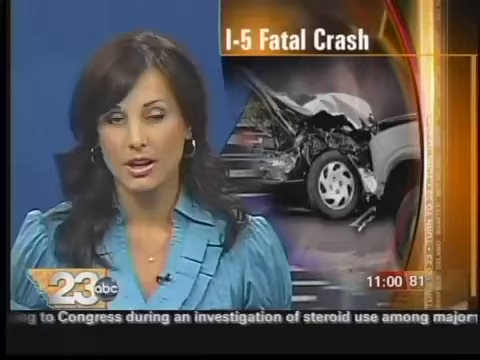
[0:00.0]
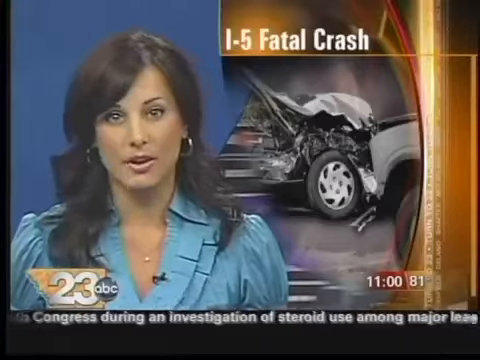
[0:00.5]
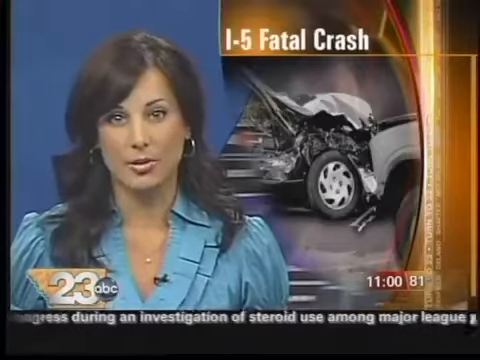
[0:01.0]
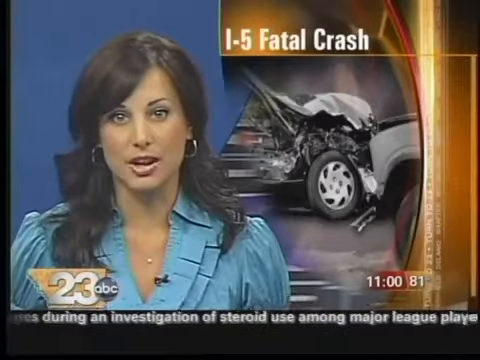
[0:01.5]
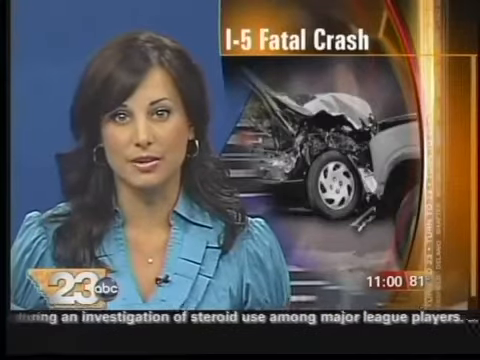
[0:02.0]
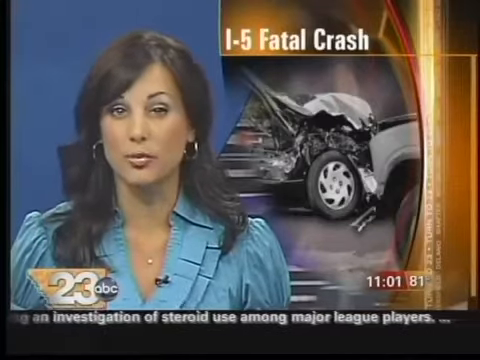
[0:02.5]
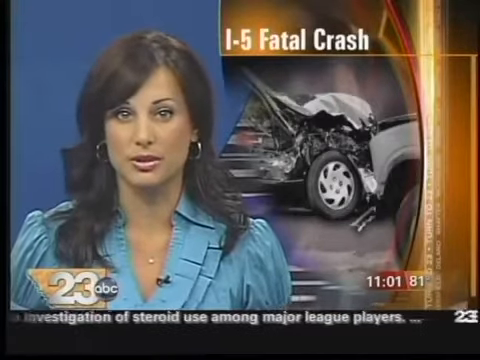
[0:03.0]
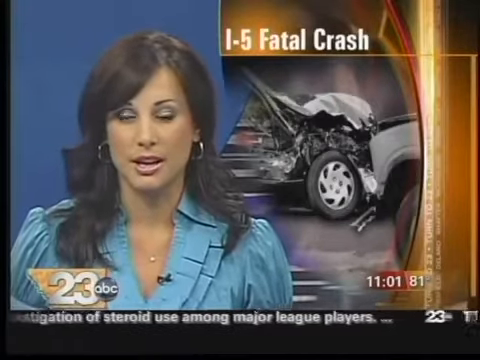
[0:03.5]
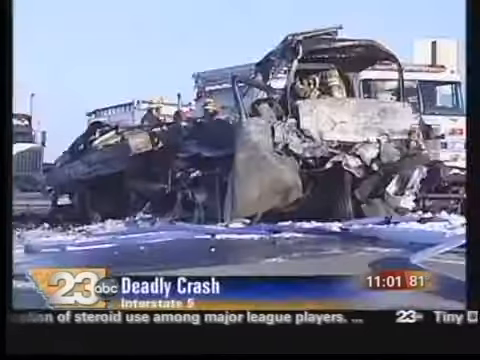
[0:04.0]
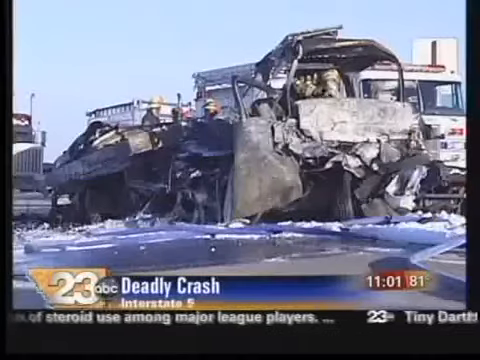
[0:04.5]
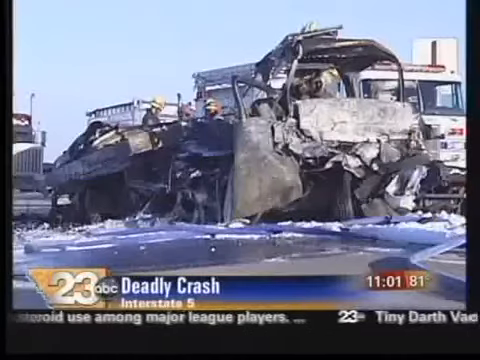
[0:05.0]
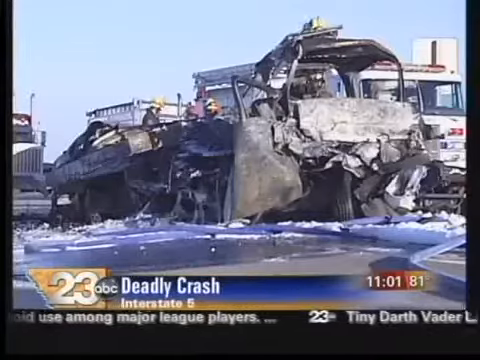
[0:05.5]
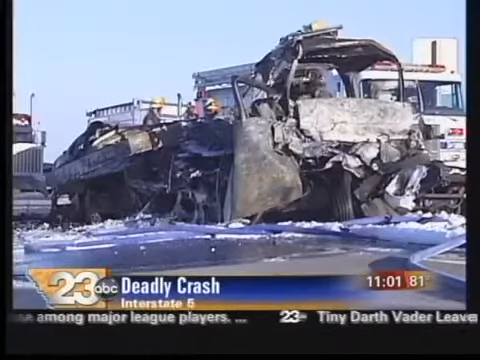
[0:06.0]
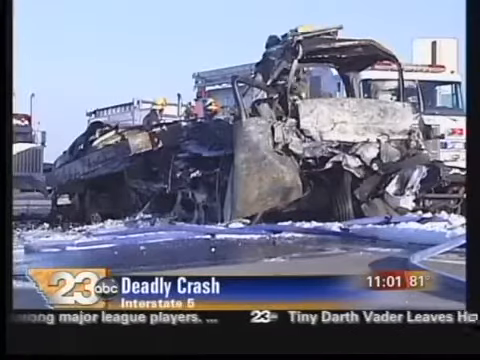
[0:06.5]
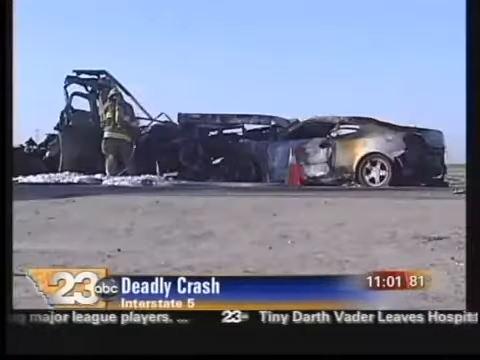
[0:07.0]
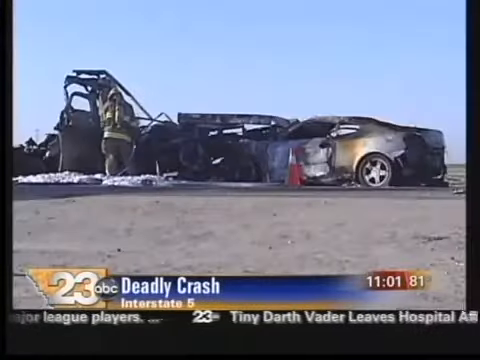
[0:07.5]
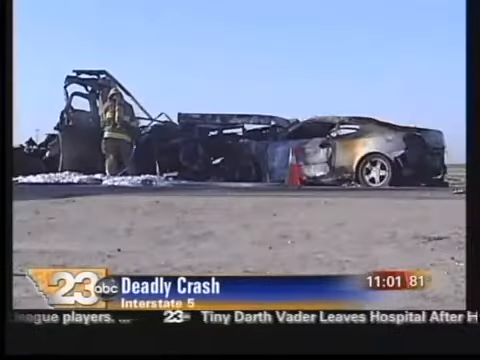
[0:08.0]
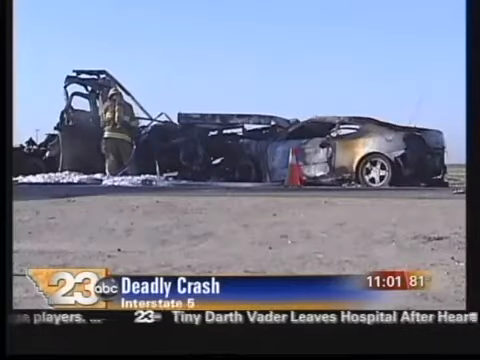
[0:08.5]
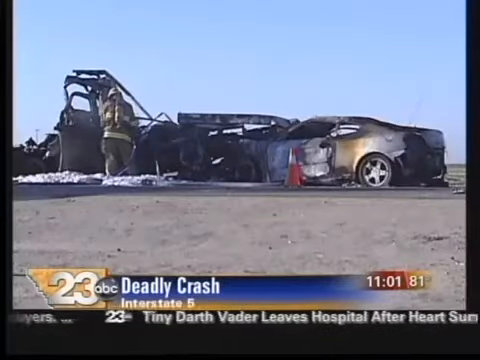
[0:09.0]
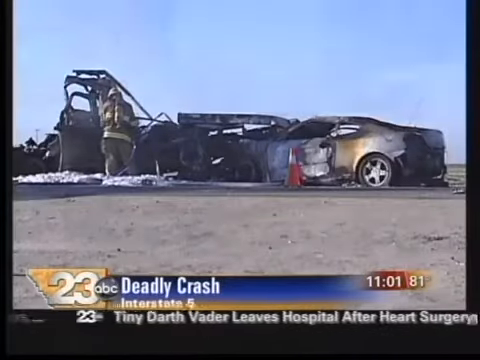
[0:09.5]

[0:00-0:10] A female news anchor is on the left side of the screen, talking. She has brown hair and wears what looks like a white or light-colored shirt, along with earrings. On the right side is a screen showing a model of a very badly damaged car, suggesting an accident, with the text "fatal crash" on top of the wrecked car. The accident looks very bad. Firefighters are on the scene, apparently trying to put out the fire.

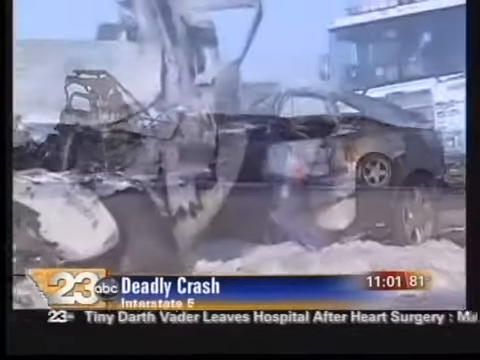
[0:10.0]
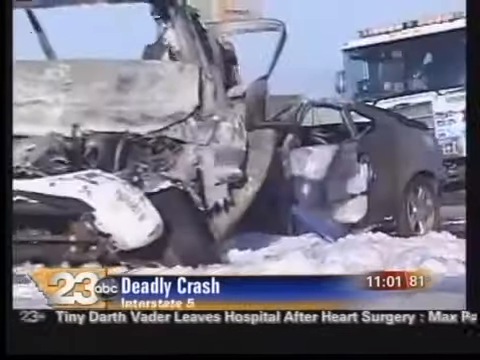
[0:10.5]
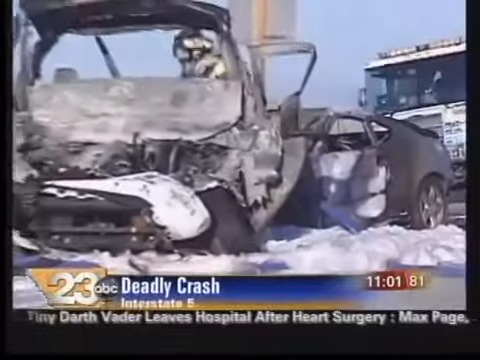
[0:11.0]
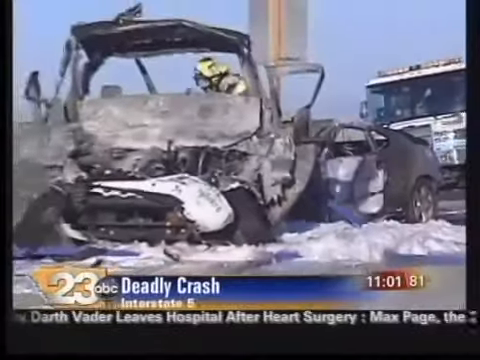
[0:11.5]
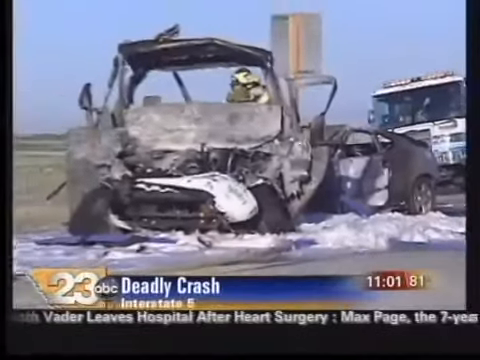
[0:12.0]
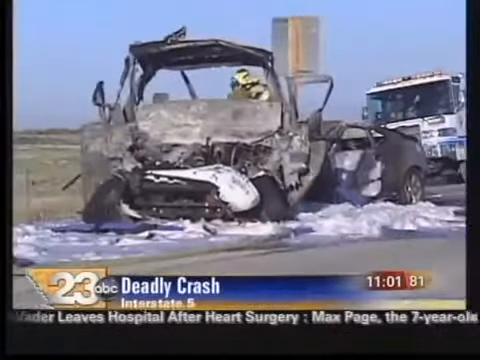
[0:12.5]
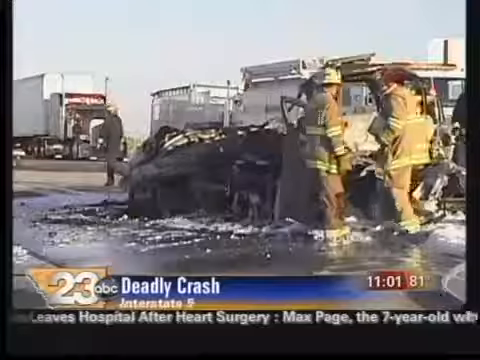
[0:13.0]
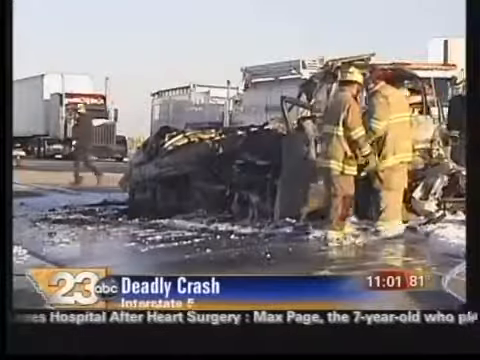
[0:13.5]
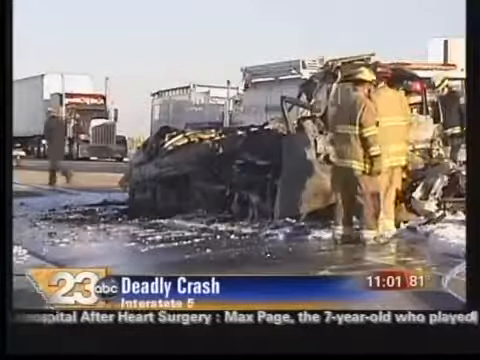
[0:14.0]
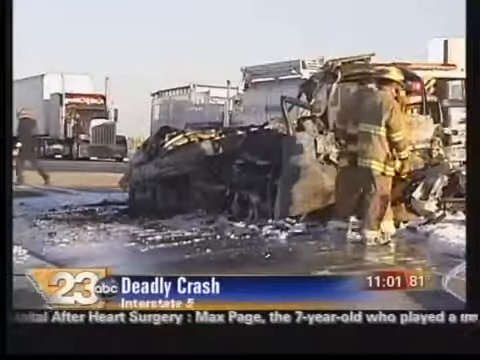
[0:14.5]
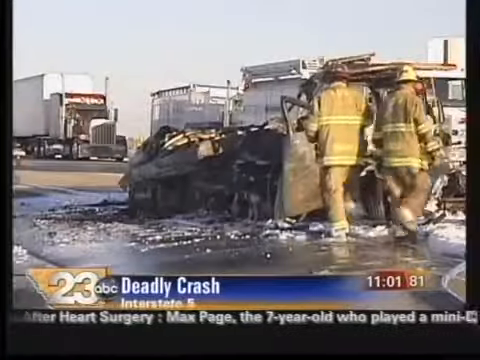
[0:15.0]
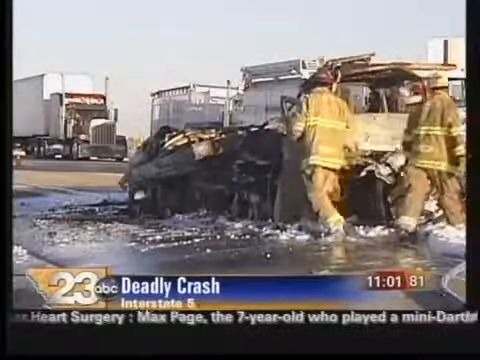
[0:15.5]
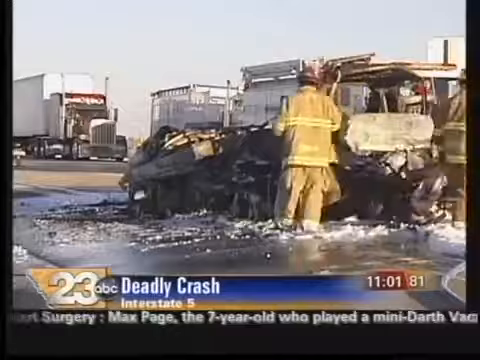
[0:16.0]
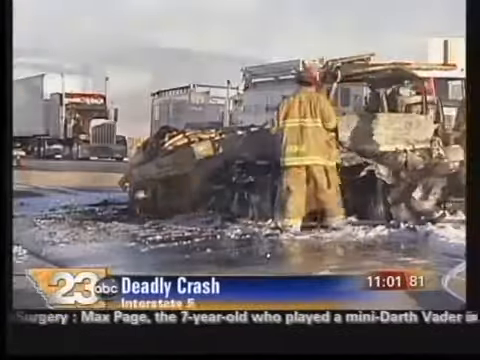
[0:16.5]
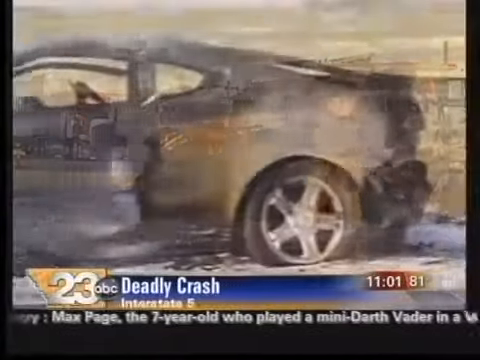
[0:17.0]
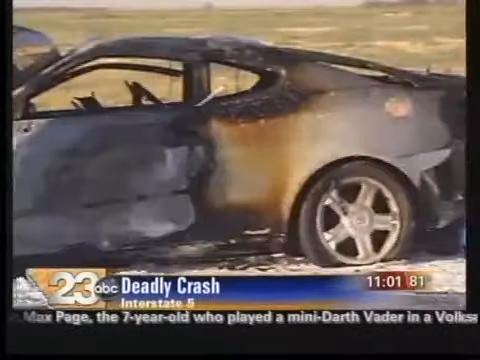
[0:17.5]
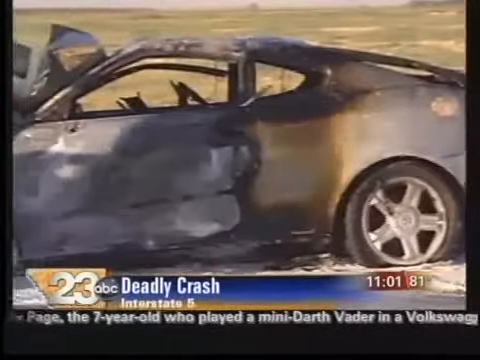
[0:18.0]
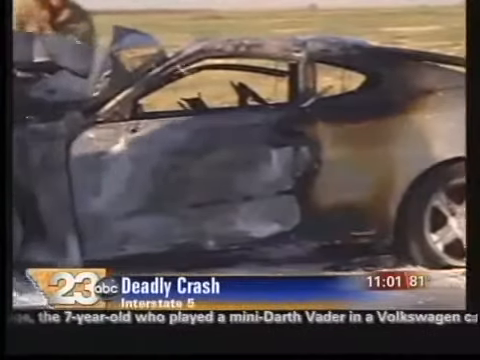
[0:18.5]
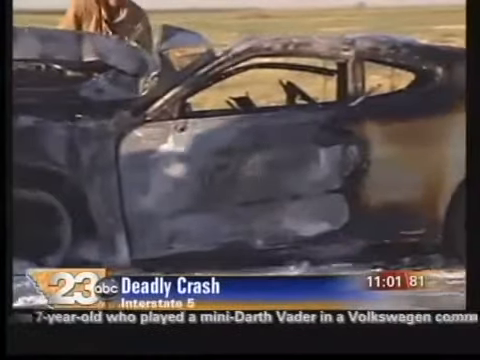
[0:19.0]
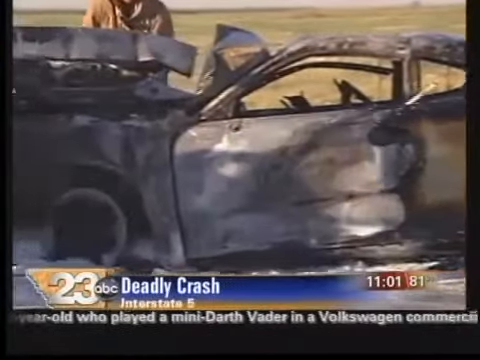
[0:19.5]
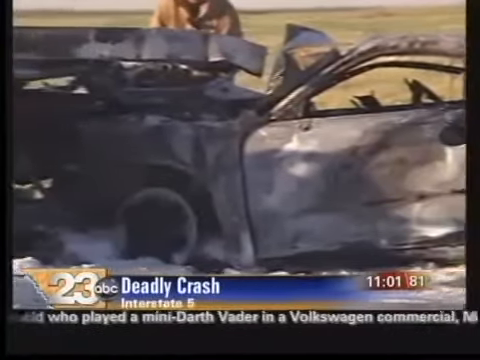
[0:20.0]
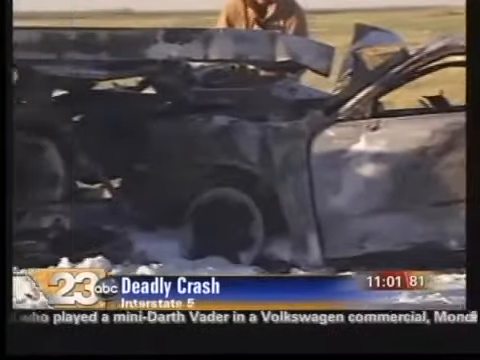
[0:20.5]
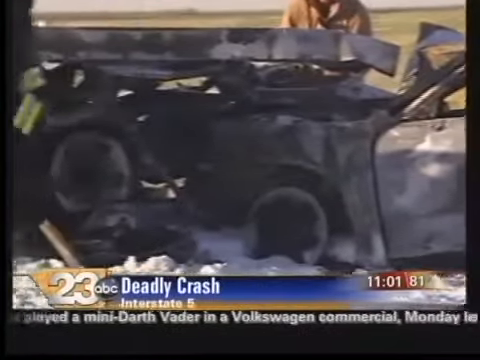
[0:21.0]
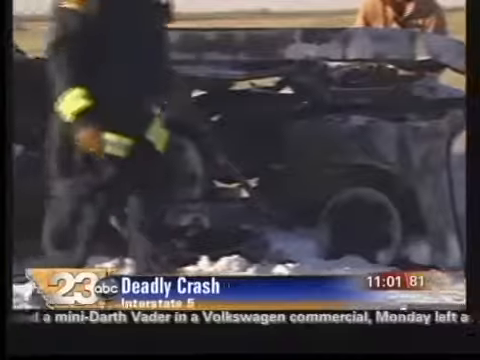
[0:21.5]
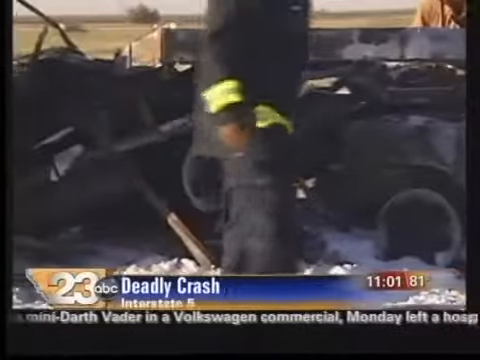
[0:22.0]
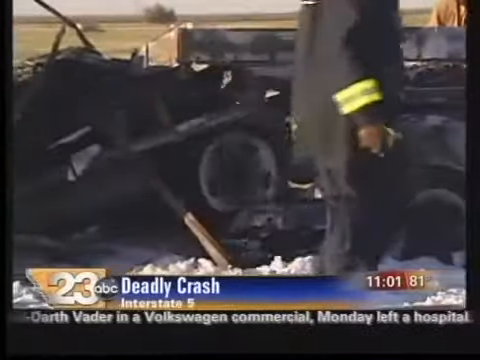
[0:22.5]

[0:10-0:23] Rescue teams are on the scene of a crash where the cars have burnt. The rescue team moves around, and firefighters wearing yellow suits and red hats put out the fire. On-screen text reads "23 ABC" and "deadly crash". It looks like a deadly accident.